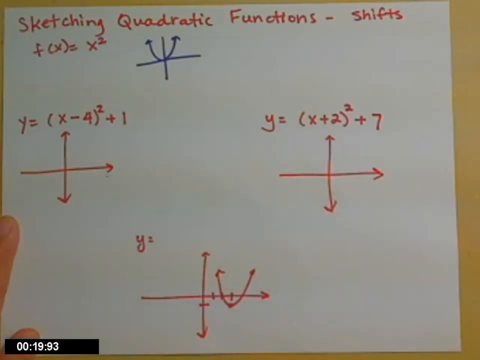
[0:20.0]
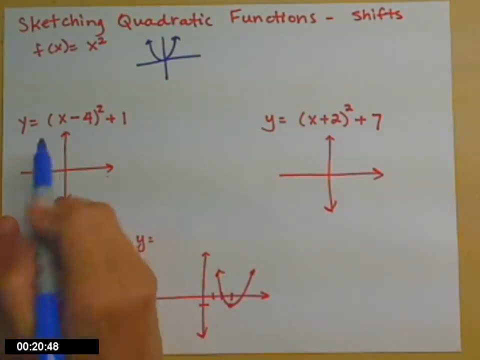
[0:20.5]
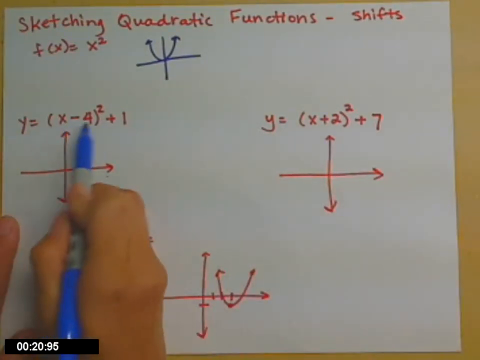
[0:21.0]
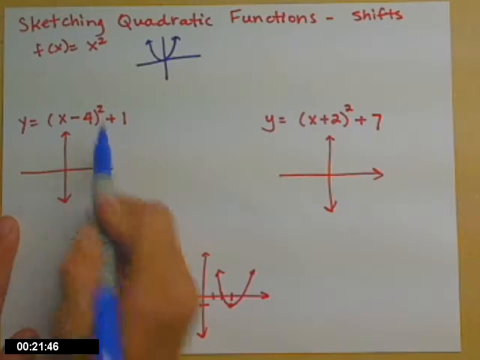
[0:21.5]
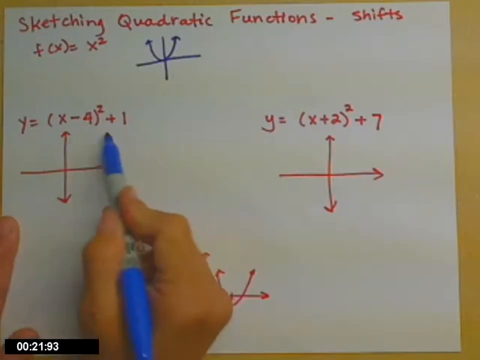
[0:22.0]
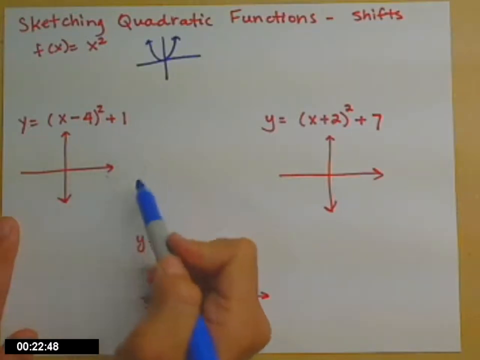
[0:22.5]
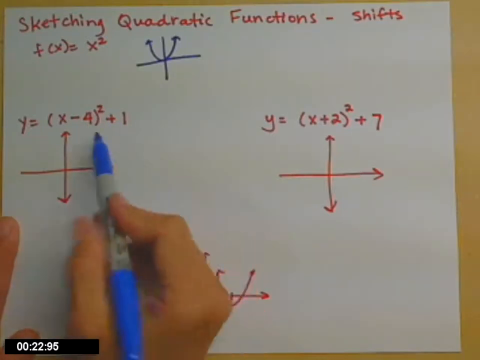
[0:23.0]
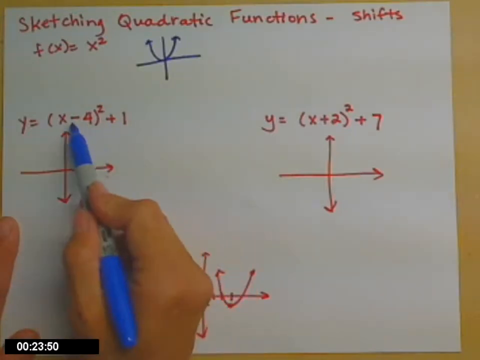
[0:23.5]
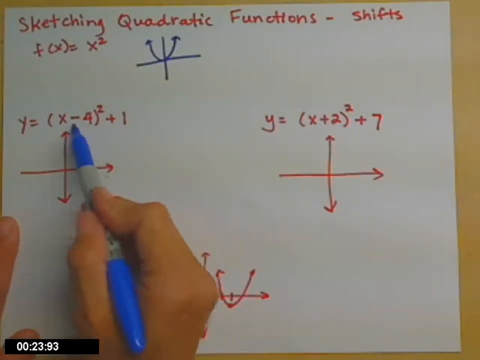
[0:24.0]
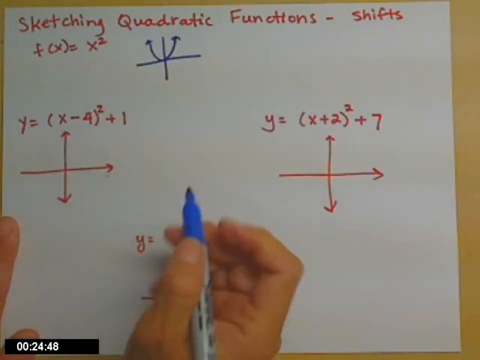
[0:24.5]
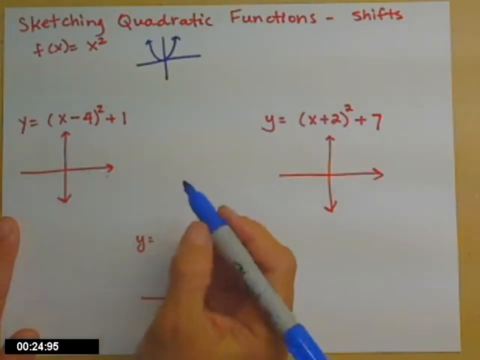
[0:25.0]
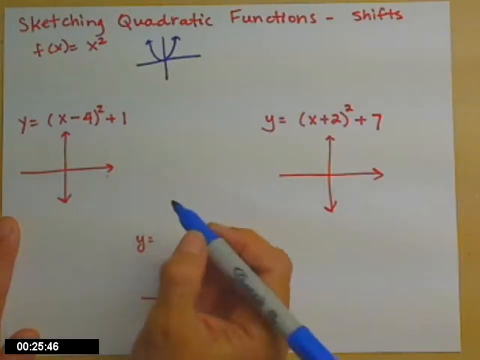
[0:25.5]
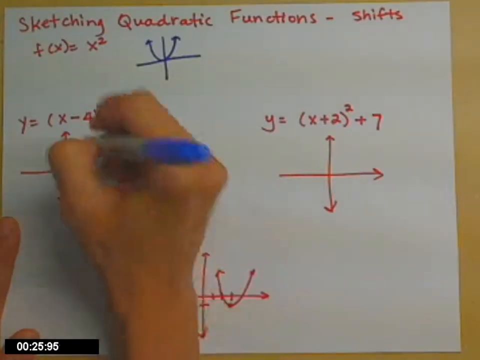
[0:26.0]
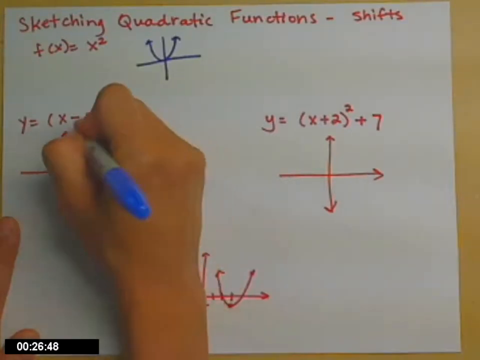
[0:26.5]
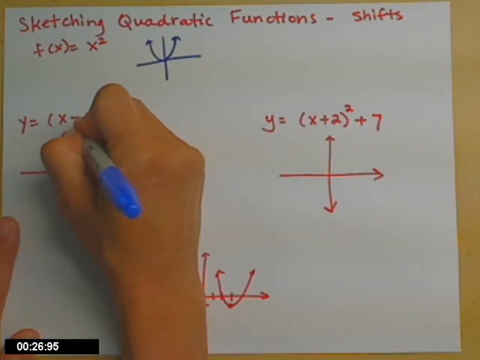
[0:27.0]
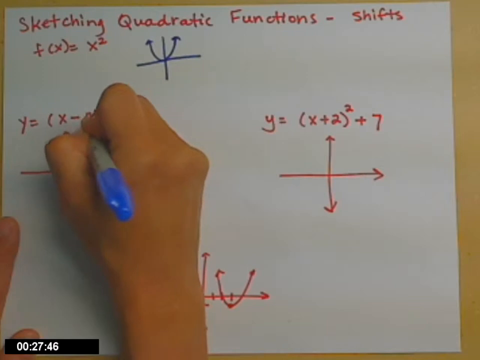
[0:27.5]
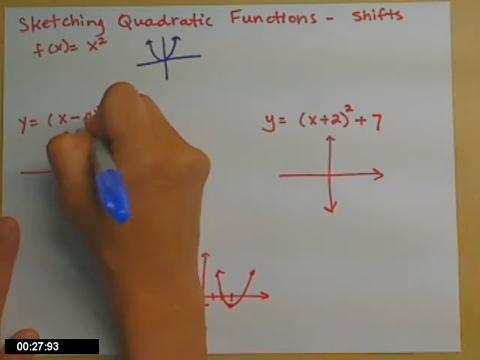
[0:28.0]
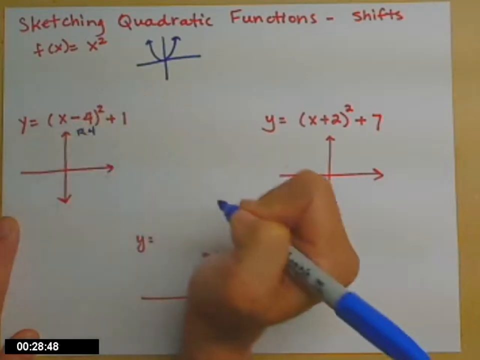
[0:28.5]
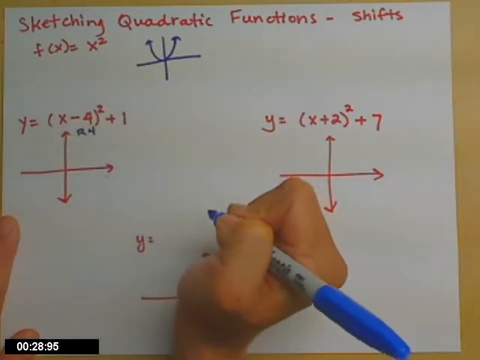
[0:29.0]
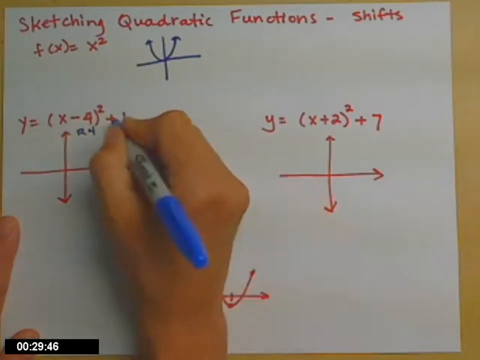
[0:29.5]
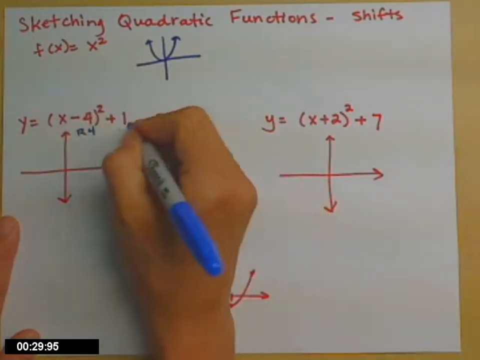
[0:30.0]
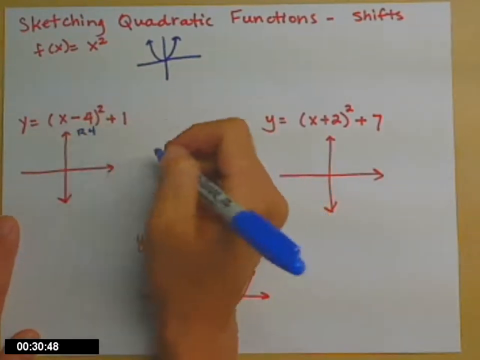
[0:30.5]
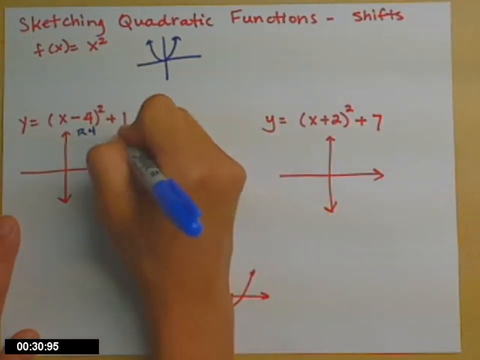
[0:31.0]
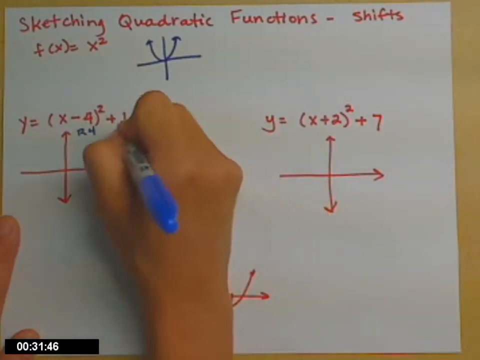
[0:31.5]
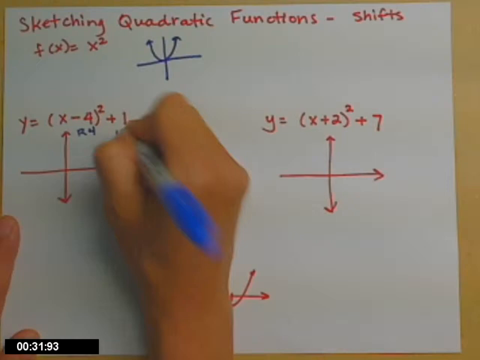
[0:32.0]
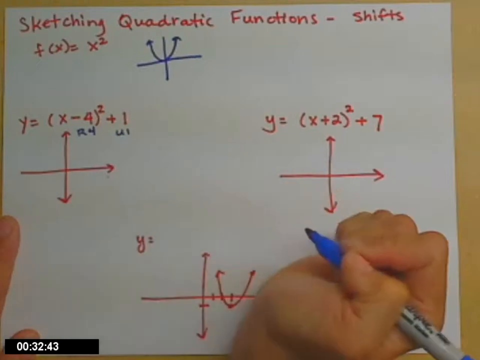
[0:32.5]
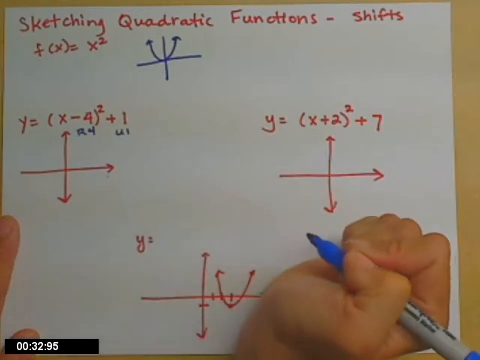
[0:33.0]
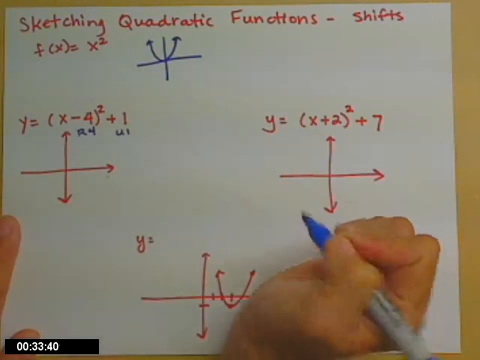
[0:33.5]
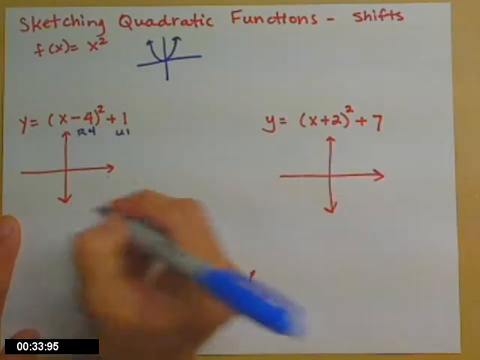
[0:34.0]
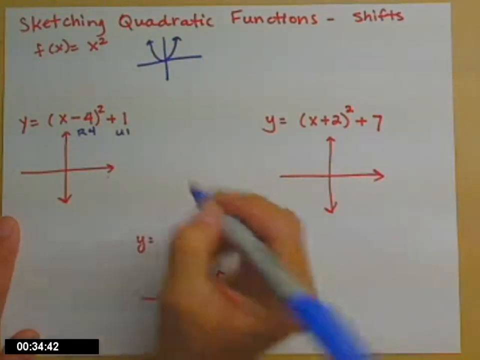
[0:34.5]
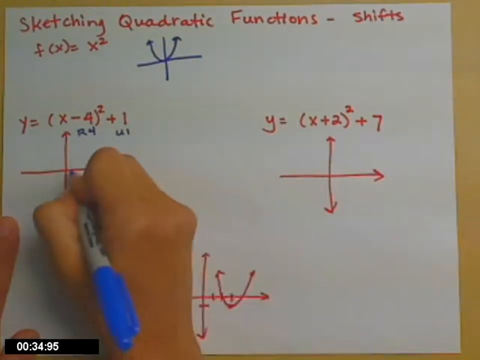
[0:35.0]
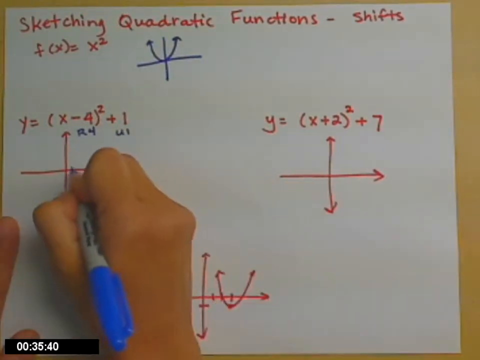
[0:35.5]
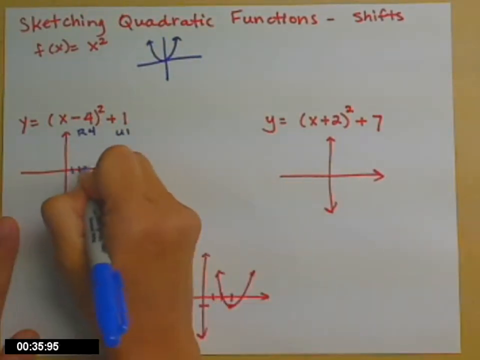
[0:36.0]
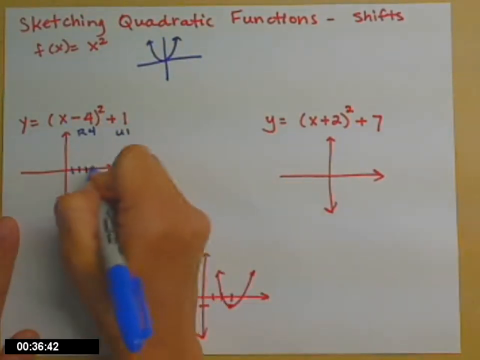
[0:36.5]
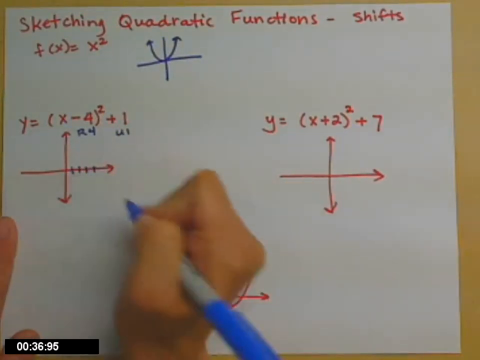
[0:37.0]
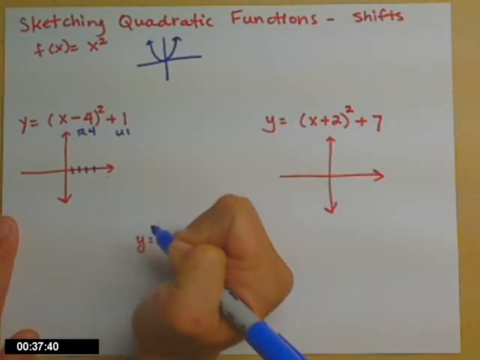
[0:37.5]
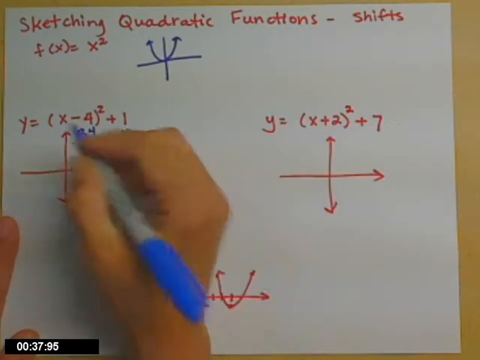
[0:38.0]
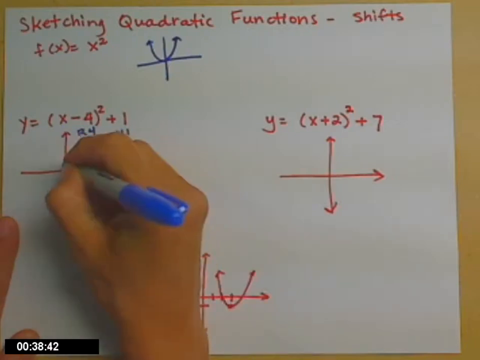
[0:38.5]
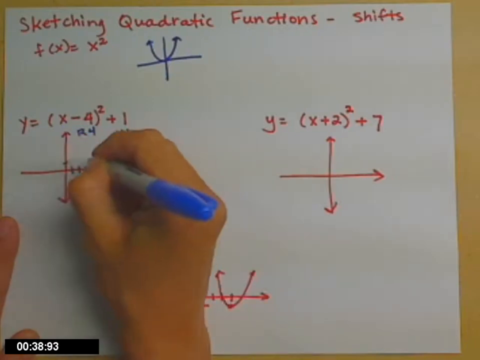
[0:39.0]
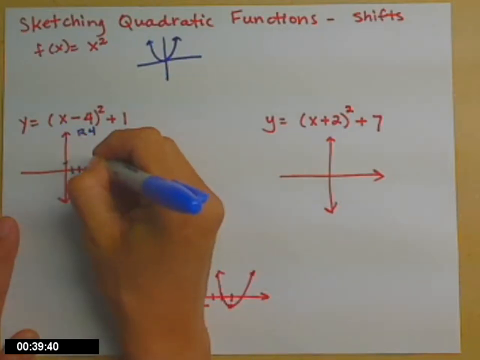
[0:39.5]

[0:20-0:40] The person's left finger is visible in the bottom left-hand corner of the screen, and to the right of it is their right hand, holding the pen with thumb and two fingers. They point to the first sum at the second bracket, wiggle the pen around at the centre of the screen, move it back to that sum and point to the "(X = 4)" section, then move the pen back down to the centre. They return to the sum on the left-hand side and, underneath "(X = 4)", write "R4" in blue pen, and next to it on the right-hand side write "U1". They wiggle the pen around the bottom right-hand corner of the screen, then move their hand back to the sum on the left and draw four vertical lines down on the horizontal arrow pointing to the right of the screen.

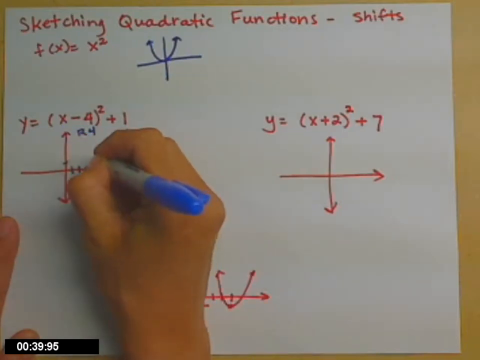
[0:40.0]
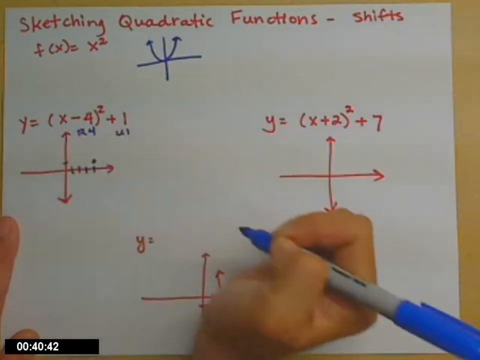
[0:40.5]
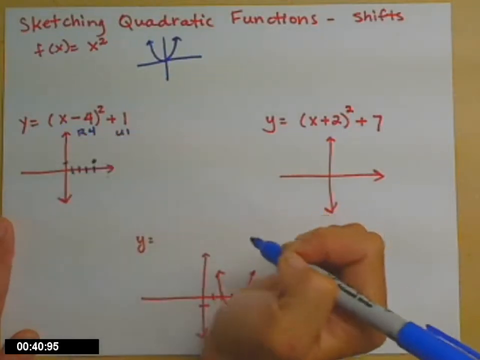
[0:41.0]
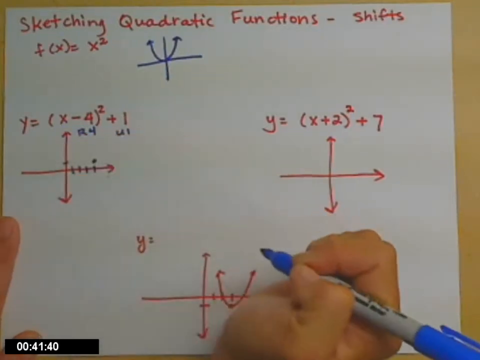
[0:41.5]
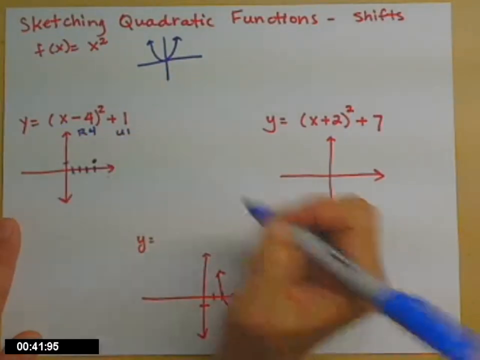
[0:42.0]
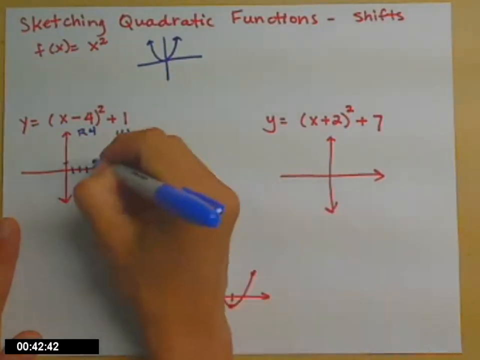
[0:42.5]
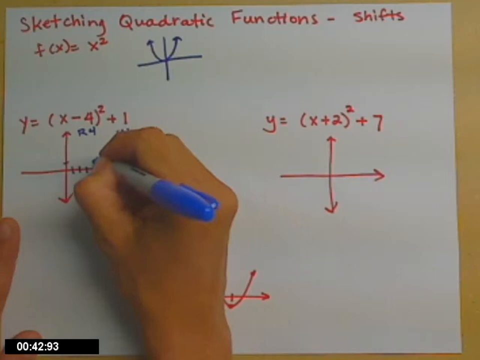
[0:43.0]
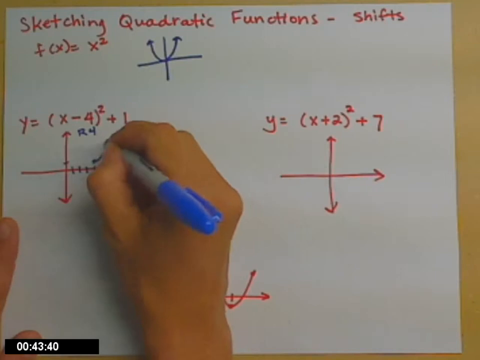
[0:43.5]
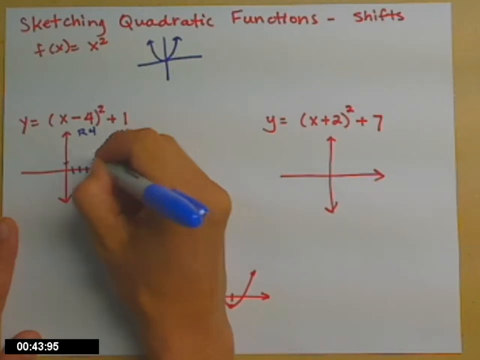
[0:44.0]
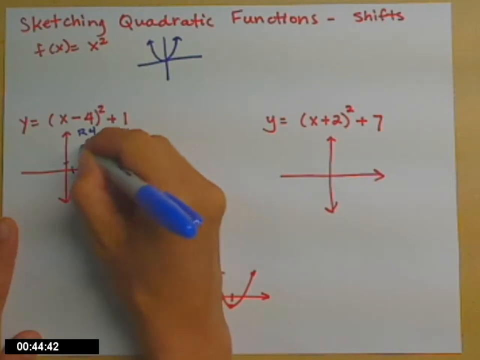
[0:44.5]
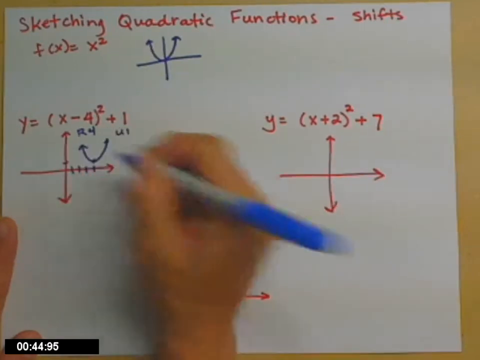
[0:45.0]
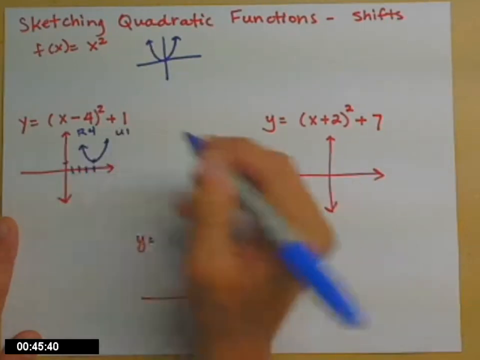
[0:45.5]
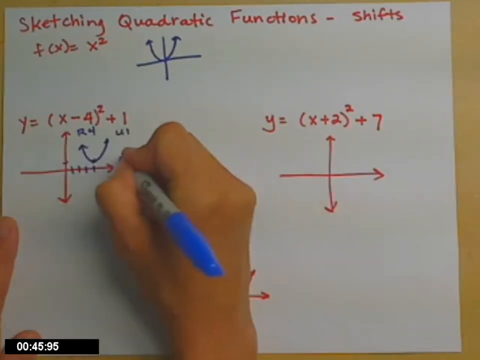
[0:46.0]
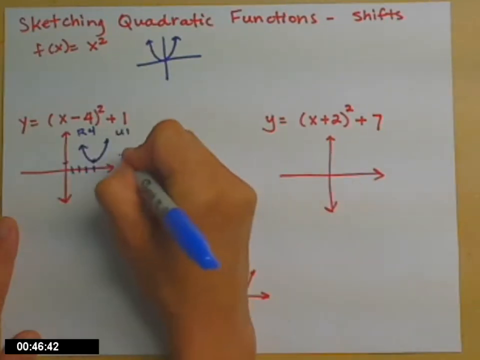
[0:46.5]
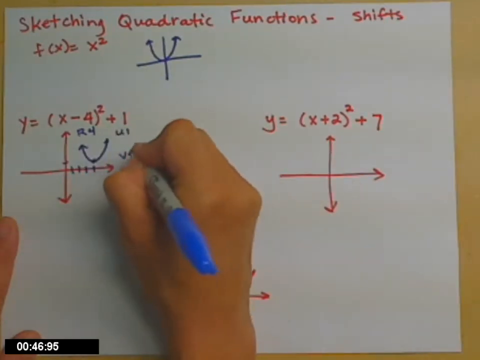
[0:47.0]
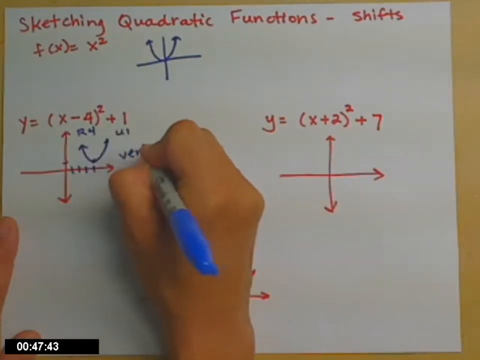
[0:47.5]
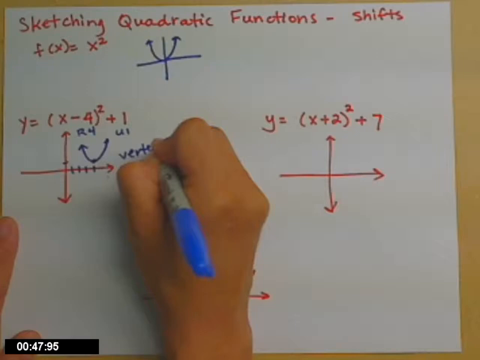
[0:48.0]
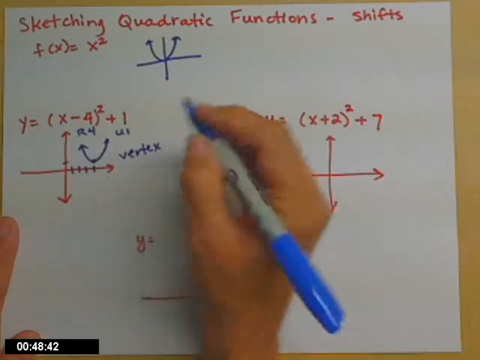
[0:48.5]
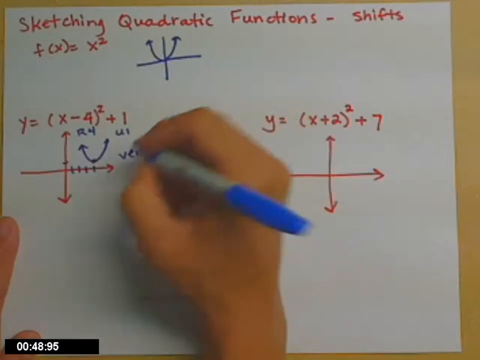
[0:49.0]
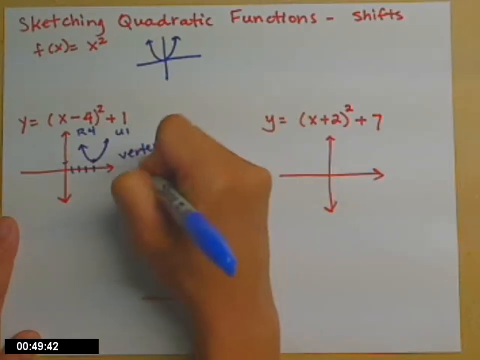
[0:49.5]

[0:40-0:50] On the fourth of the four vertical lines just drawn, they put a dot over the top so it looks like the letter I. They move their hand back down to the bottom right-hand corner of the screen, with the full hand and pen still visible, then bring it back up. They draw a U-shaped arrow again, with the arrows pointing up, above the vertical lines, and on the right-hand side they write "vertex" with the pen.